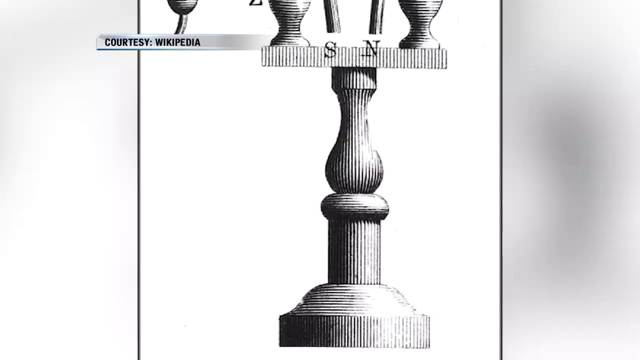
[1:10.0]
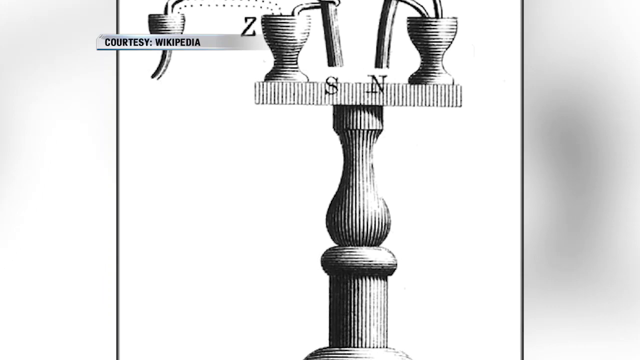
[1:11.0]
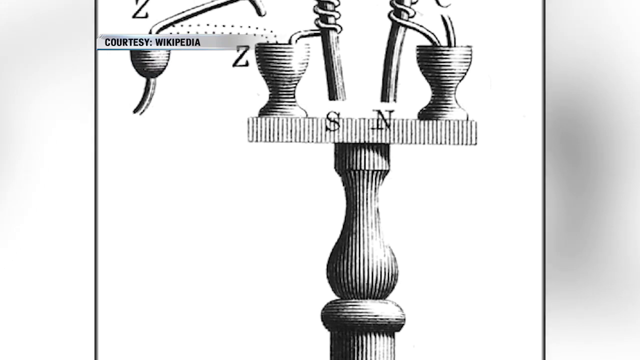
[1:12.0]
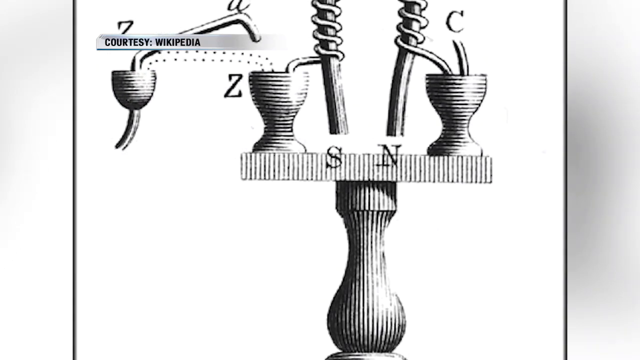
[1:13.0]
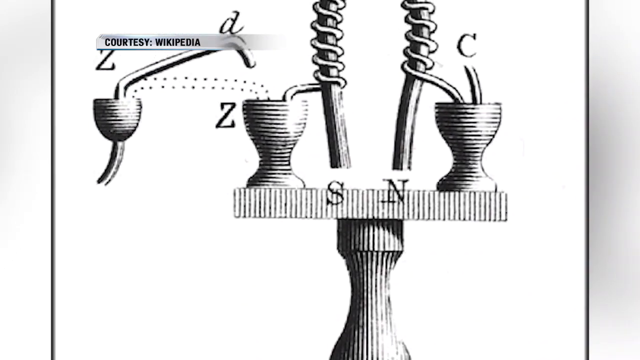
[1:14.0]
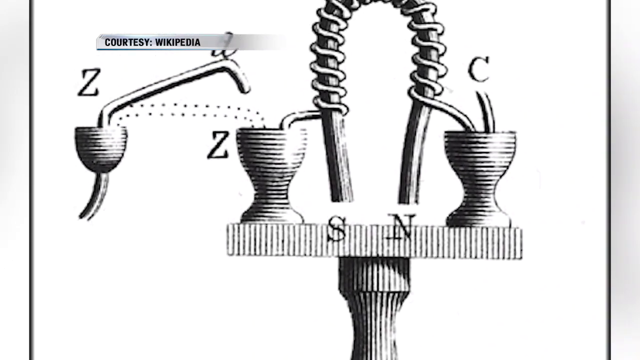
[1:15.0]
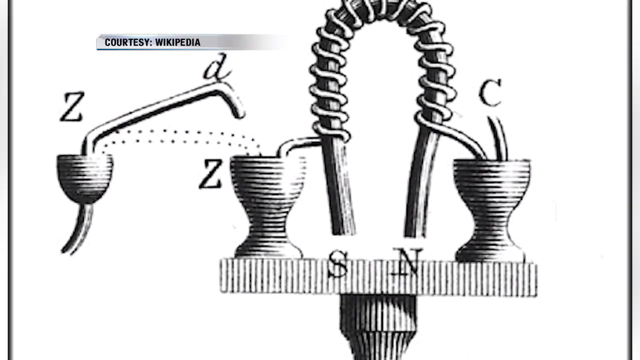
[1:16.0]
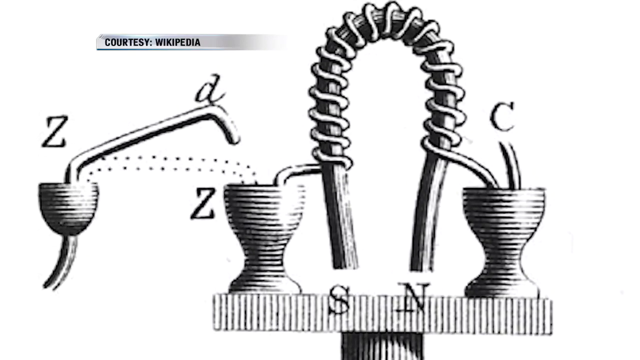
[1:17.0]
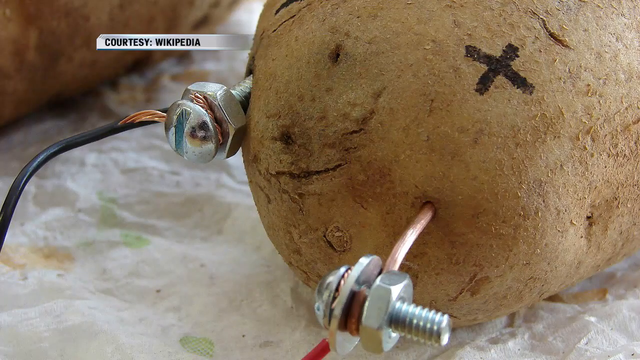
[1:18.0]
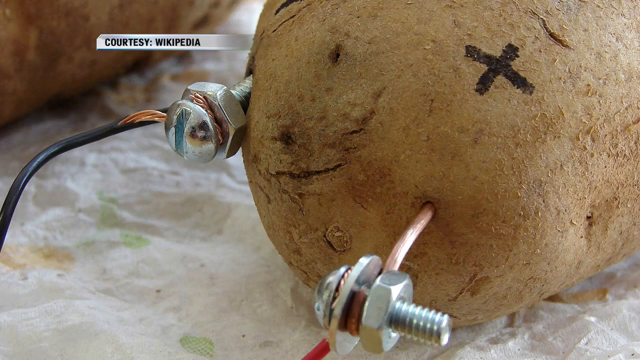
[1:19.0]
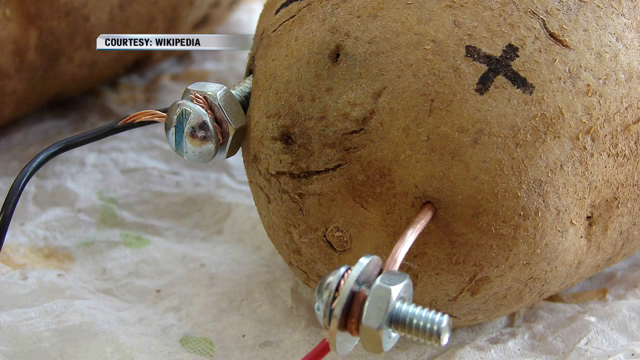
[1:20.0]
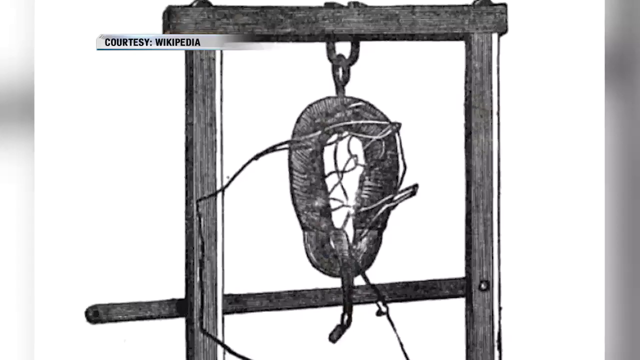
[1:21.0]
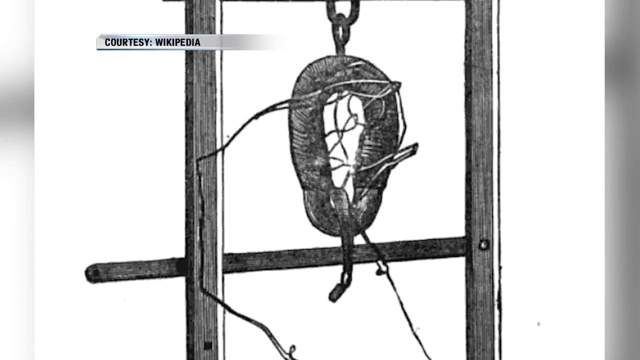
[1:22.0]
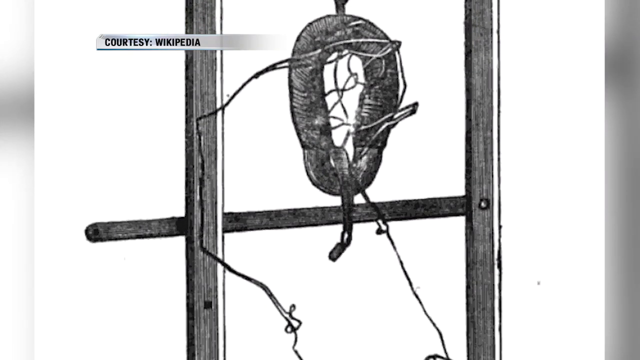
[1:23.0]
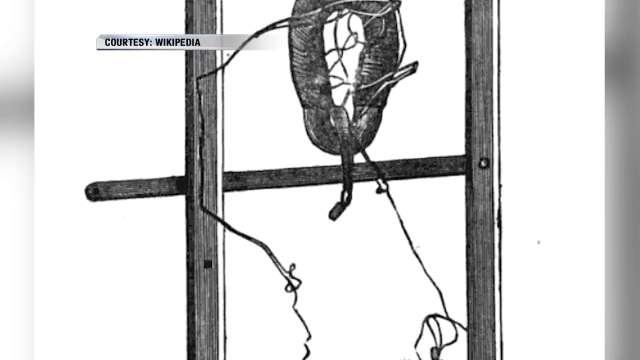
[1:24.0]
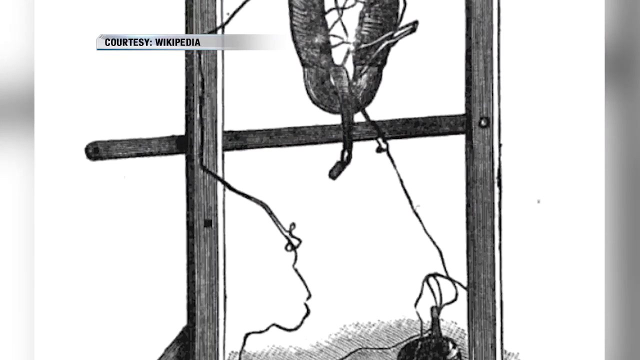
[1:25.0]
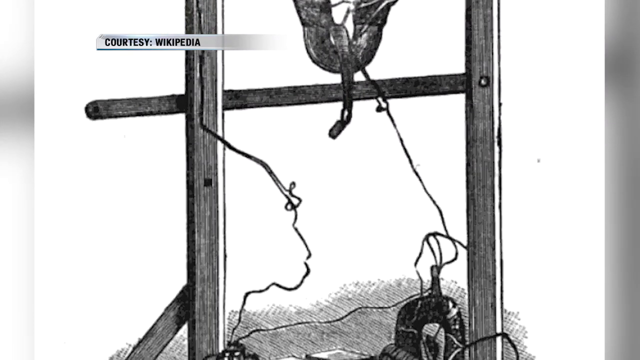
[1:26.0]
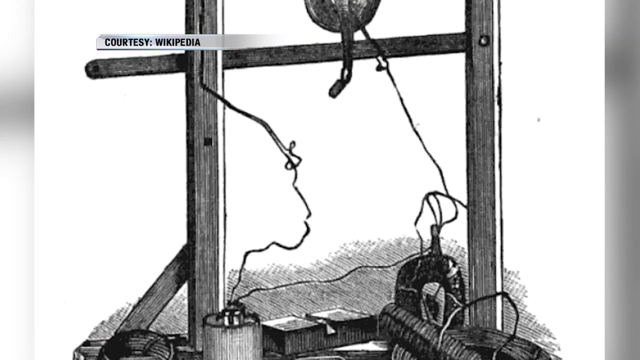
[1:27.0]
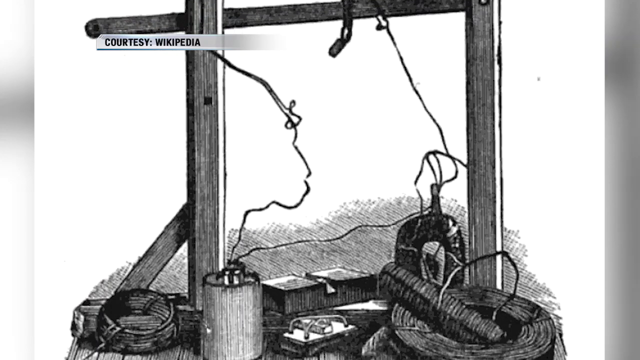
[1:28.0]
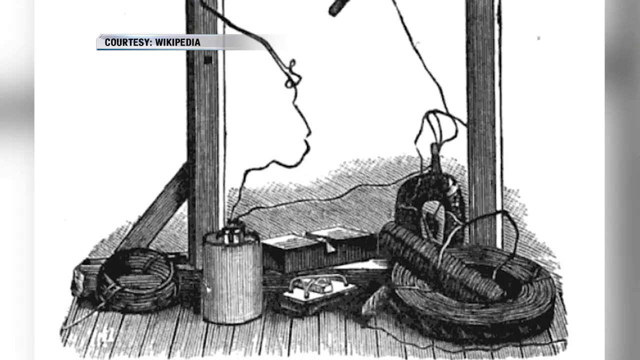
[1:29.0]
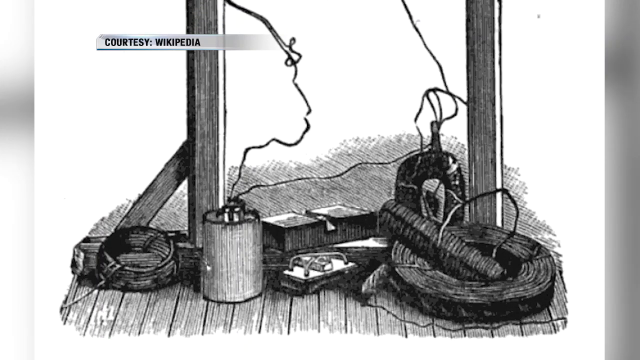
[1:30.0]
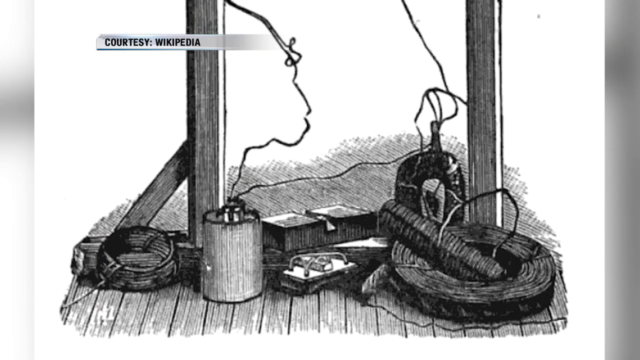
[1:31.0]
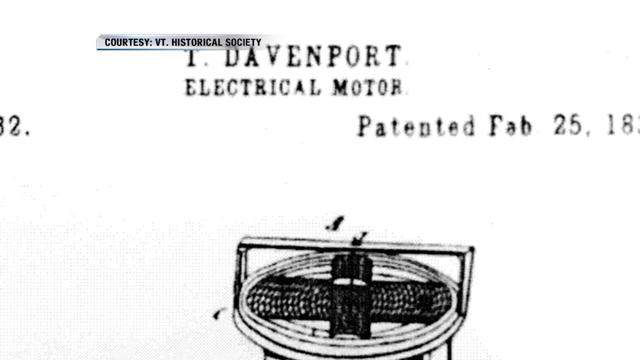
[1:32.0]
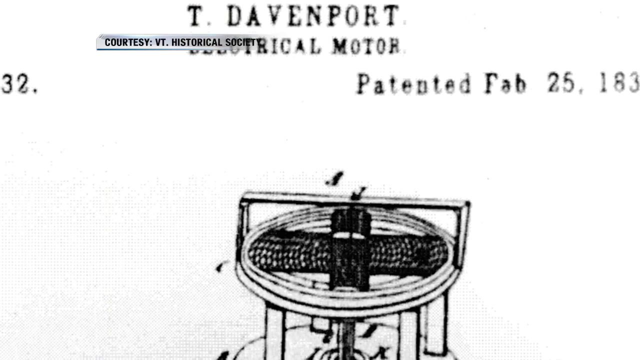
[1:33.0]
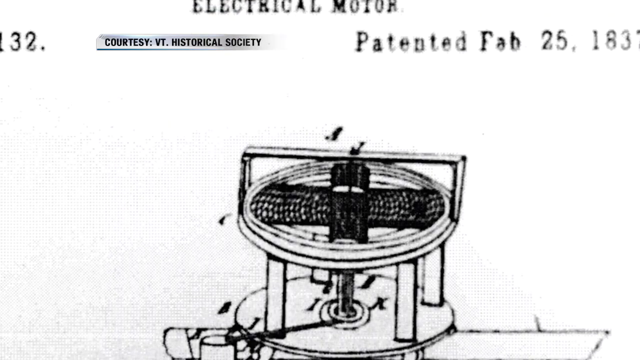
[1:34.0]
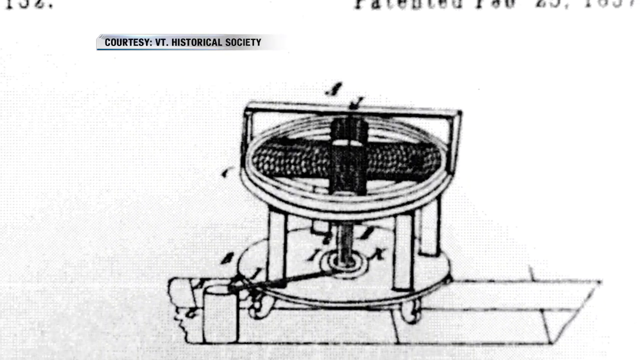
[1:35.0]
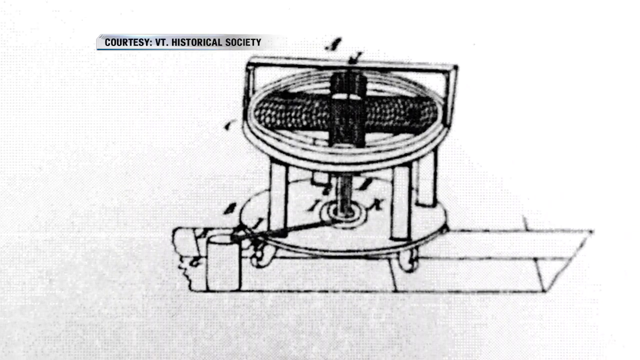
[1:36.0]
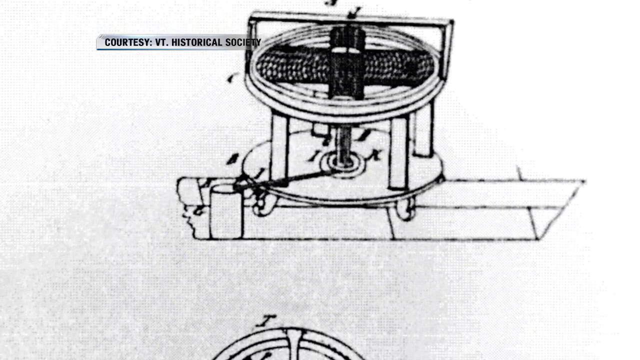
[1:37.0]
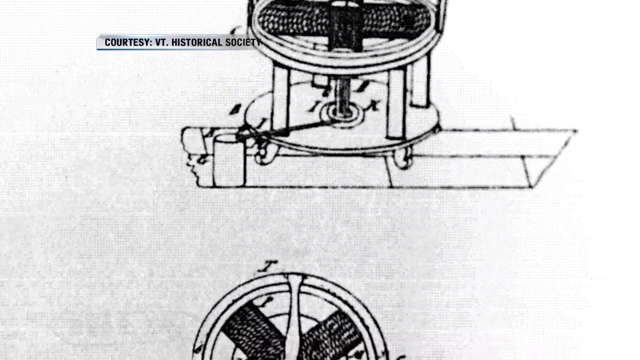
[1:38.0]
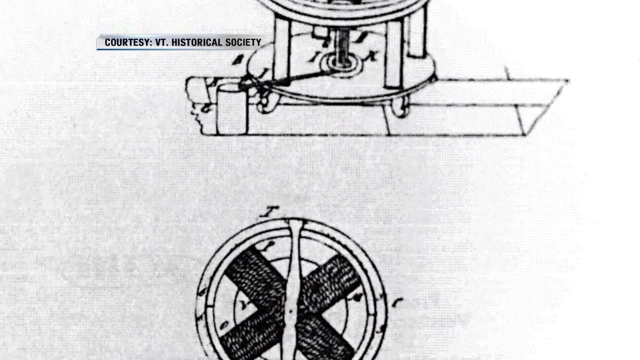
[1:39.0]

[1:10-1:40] A diagram shows wires wrapped around rods, apparently illustrating how electricity is conducted. The video cuts to an image of a potato with copper wire sticking out of it and bolts hanging from or attached to the copper wire; there are two of them. One has a copper wire going directly into the potato, with a plus sign drawn in what looks like black marker, and on the left side a screw is the piece placed inside the potato. The image apparently shows how energy can be gotten out of a potato. The video then cuts to an old black-and-white picture of another diagram, this time kind of oval-shaped with a hole in the middle and wires wrapped around it, attached to some kind of wooden frame.